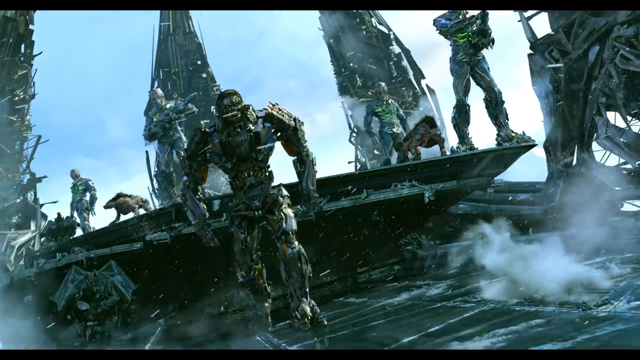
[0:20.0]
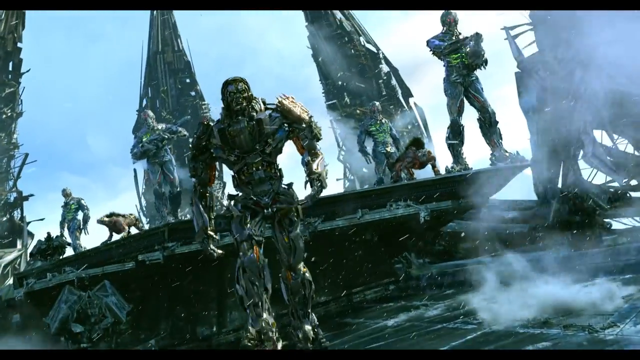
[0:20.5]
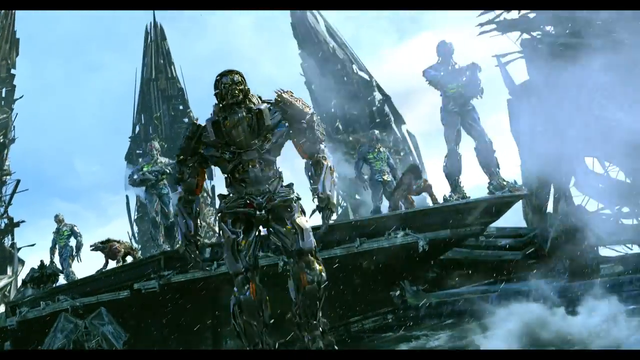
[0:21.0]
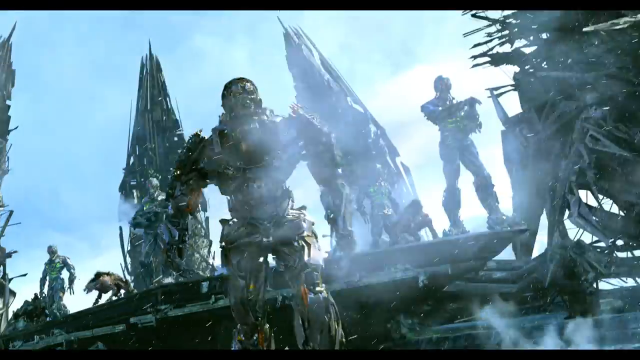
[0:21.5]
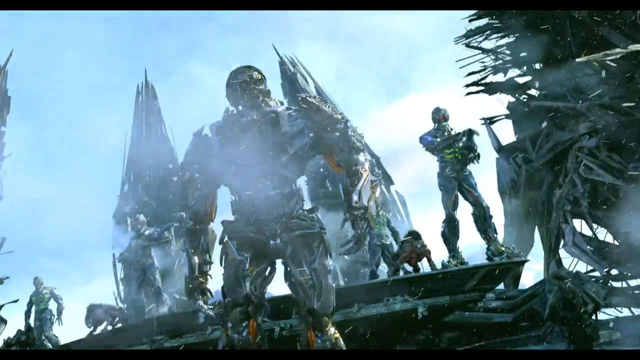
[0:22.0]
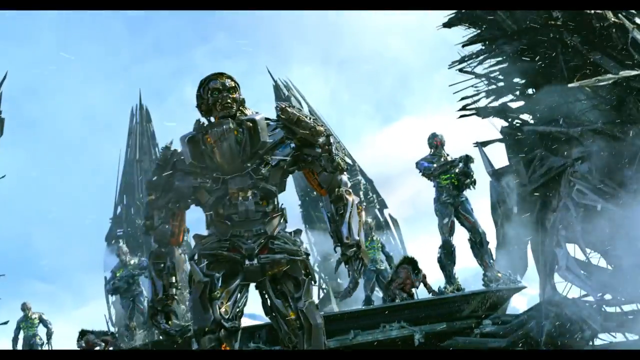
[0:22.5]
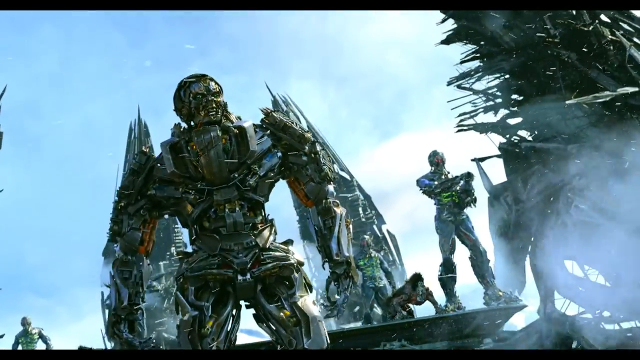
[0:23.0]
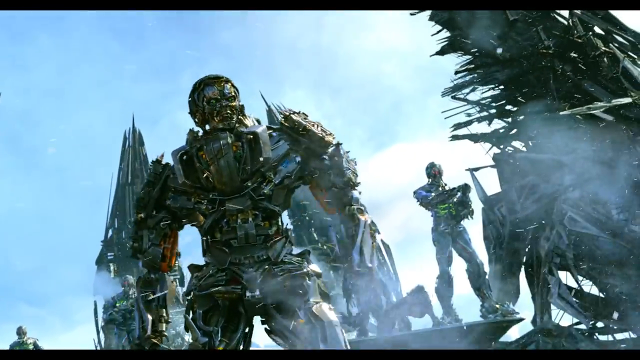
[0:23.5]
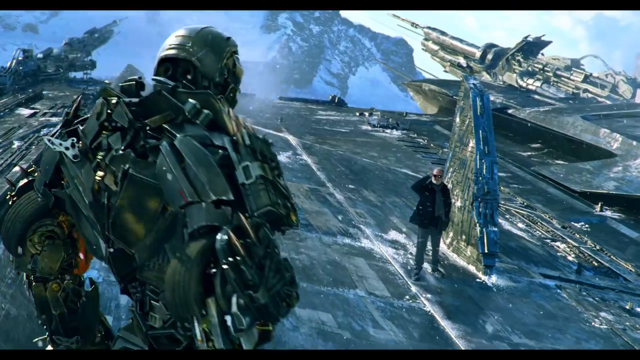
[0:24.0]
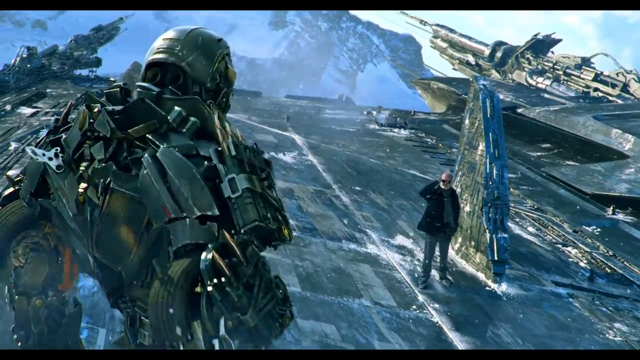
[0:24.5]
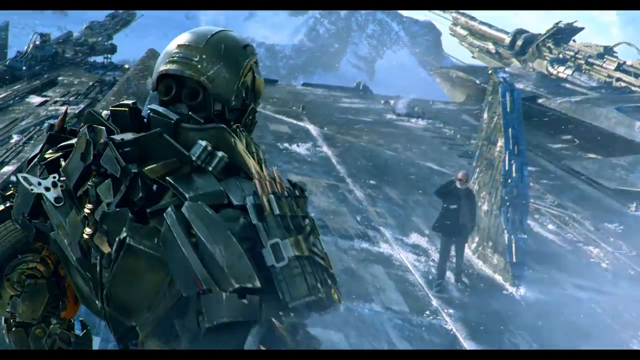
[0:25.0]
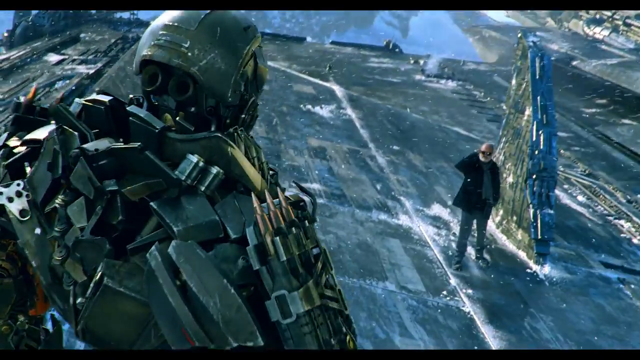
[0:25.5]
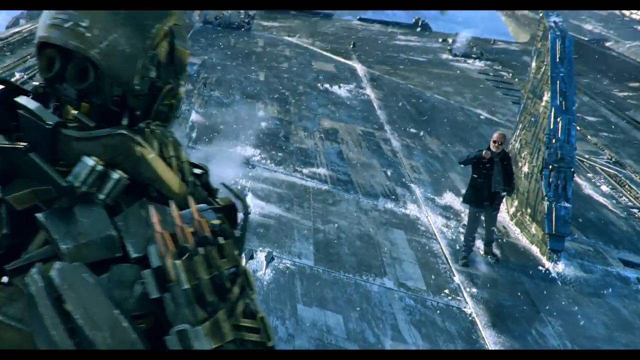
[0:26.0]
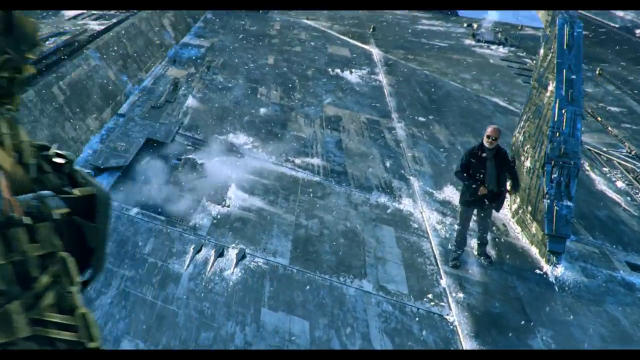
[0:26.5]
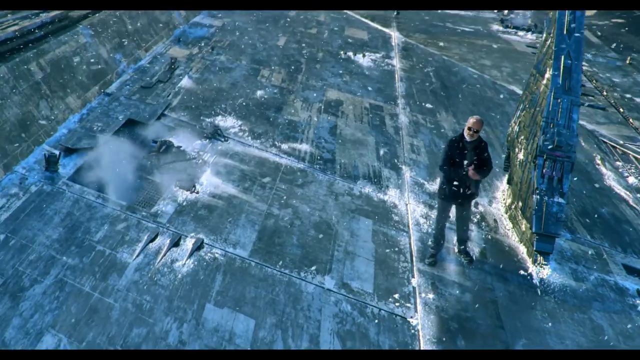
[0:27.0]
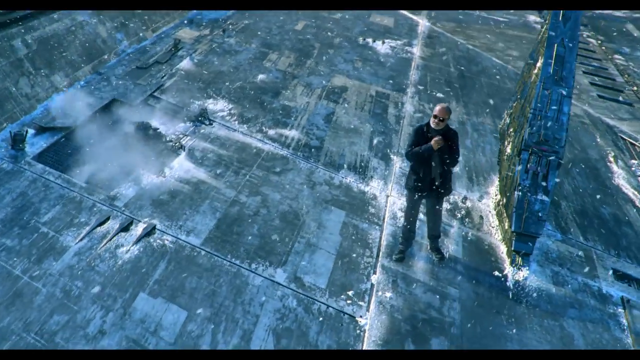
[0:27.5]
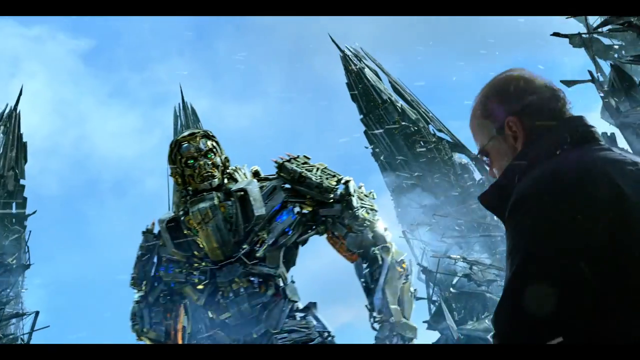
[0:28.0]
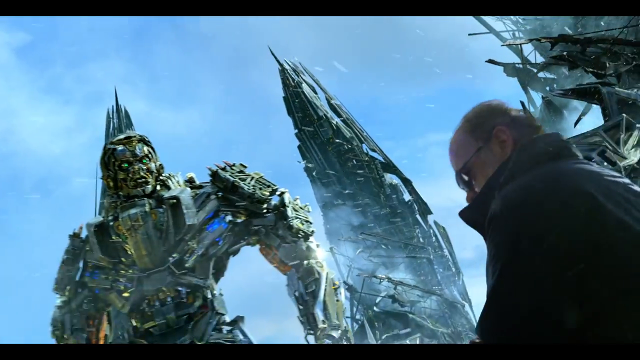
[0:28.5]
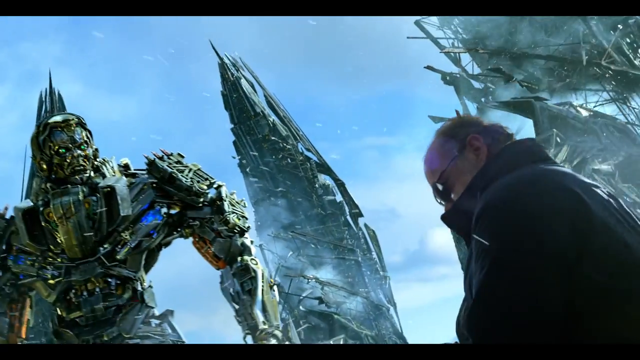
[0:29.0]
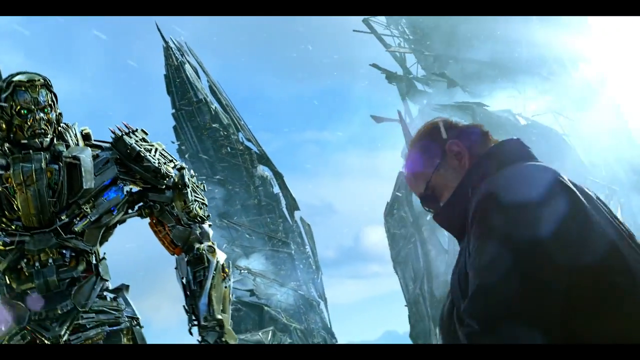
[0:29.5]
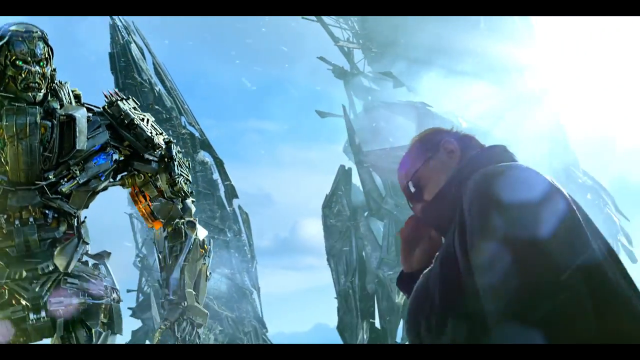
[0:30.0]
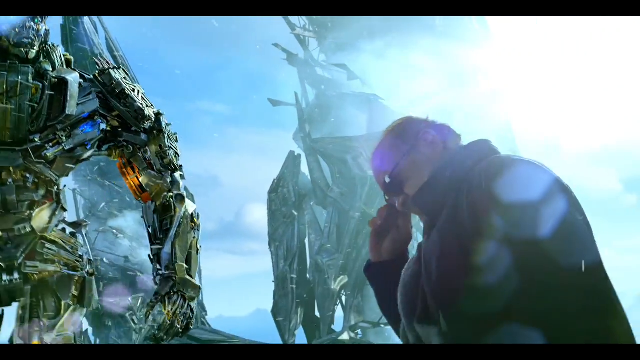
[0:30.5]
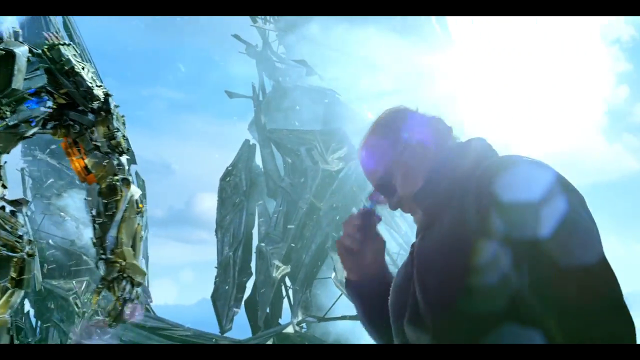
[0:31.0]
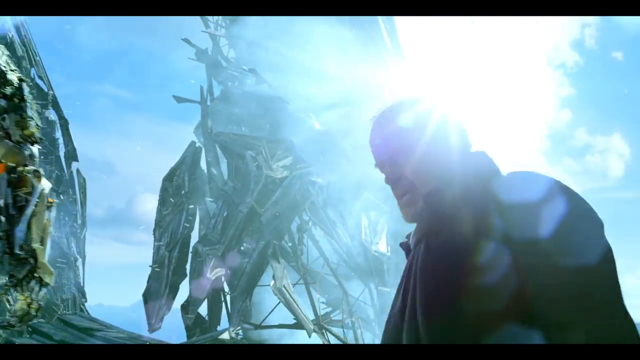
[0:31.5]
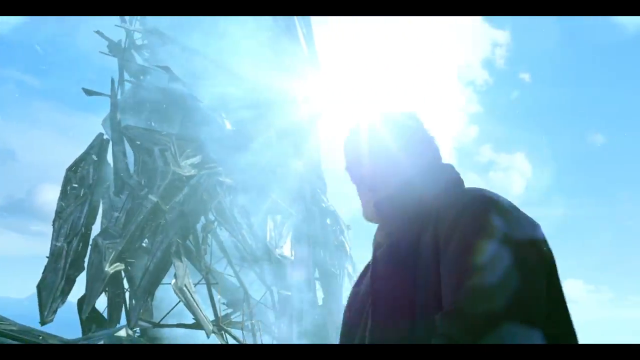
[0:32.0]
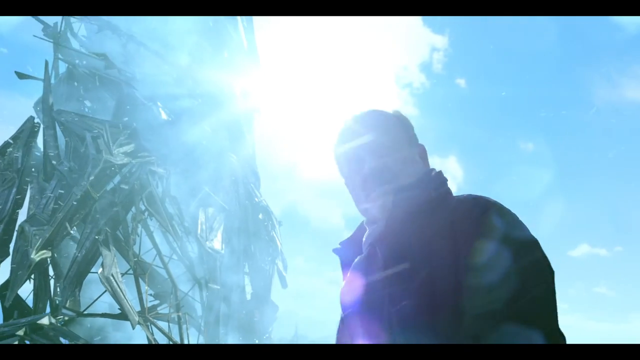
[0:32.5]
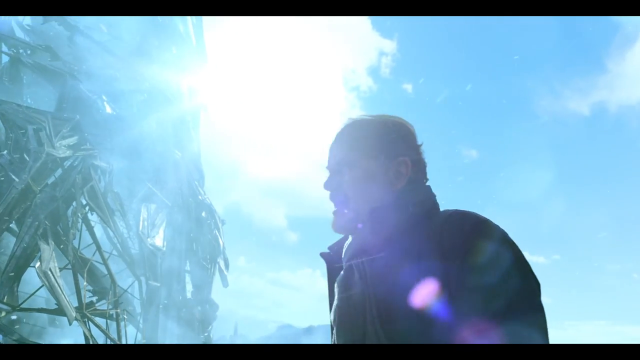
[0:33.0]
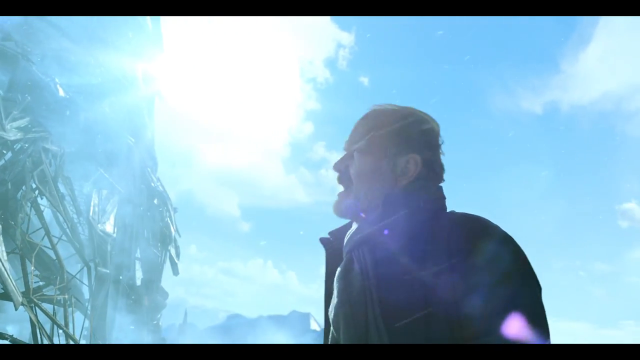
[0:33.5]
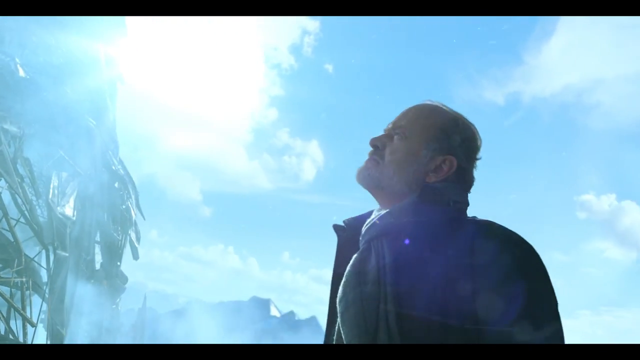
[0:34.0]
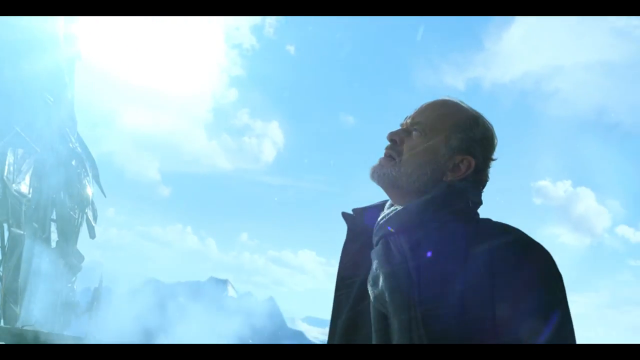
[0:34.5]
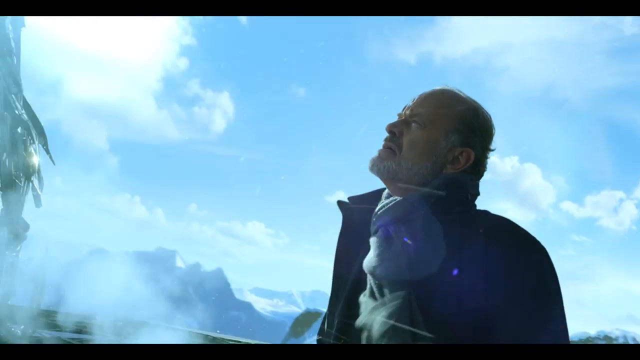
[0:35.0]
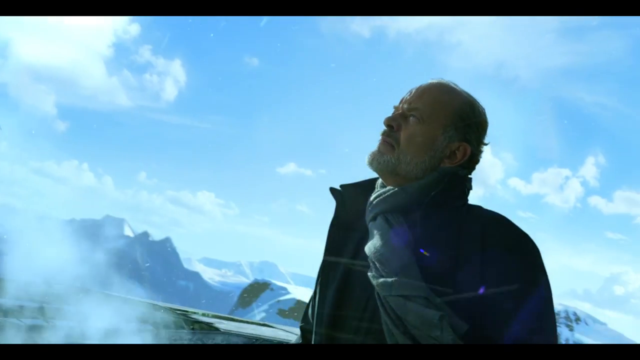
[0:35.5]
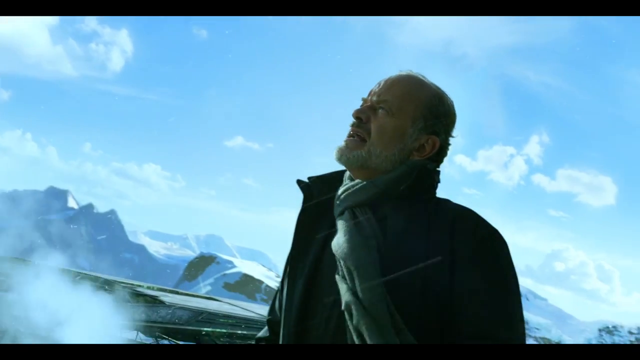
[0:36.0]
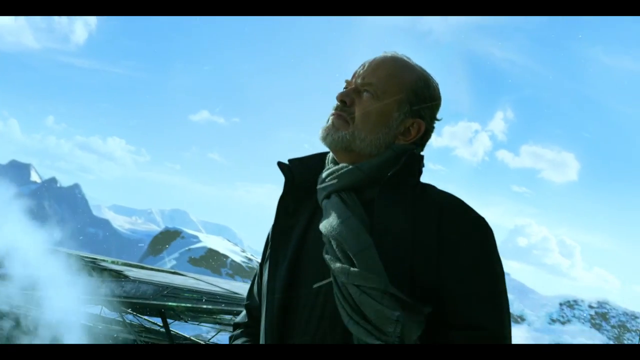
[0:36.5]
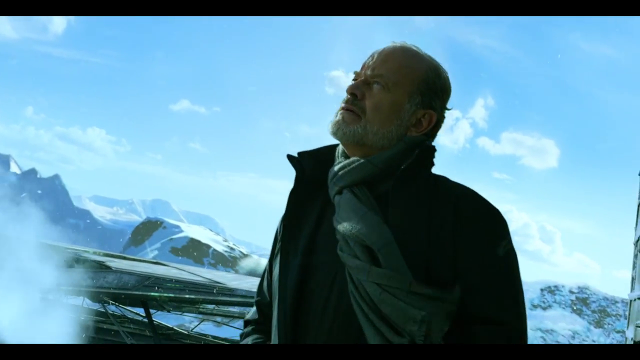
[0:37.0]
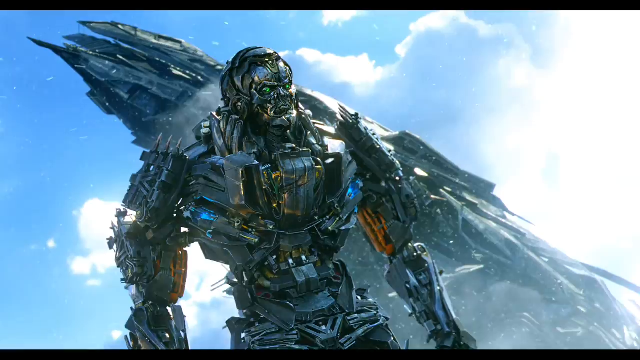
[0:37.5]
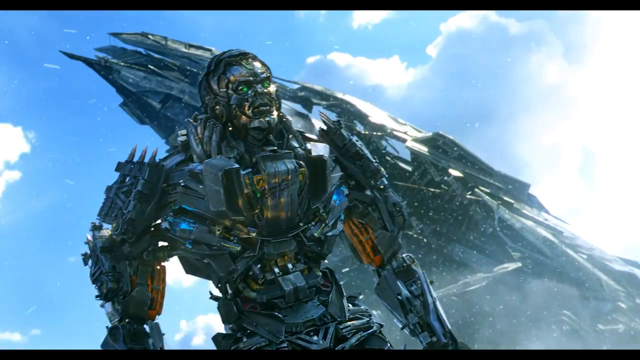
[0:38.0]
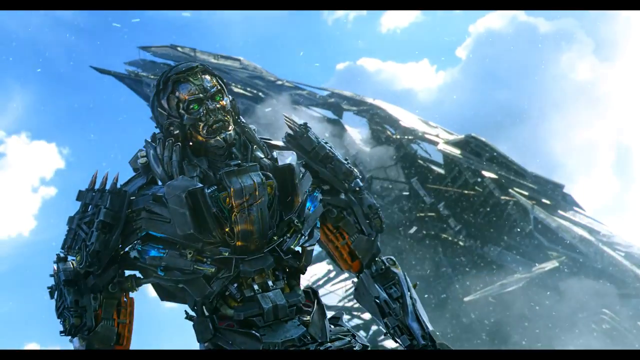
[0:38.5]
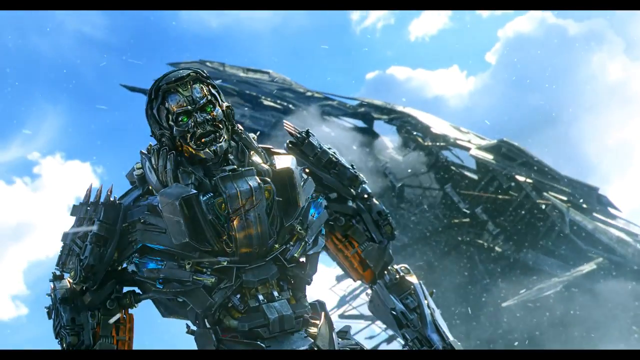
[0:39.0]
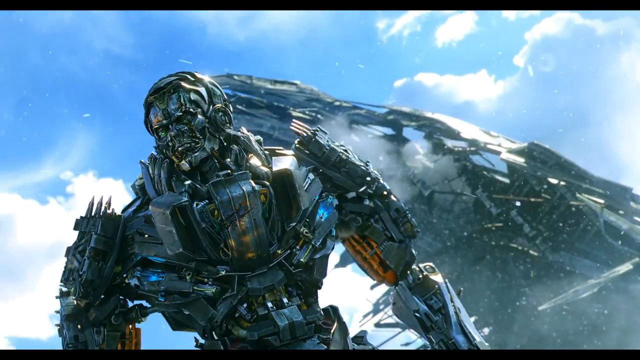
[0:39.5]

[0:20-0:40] One robot, who looks like the leader of the others because he looks a little different from the rest, walks forward toward a human man wearing sunglasses and a white and black coat. The man is old and looks very confident, and he does not seem afraid as he talks to the machine man. He looks up at the alien and says something, and the alien responds. The man seems to be the aliens' leader.